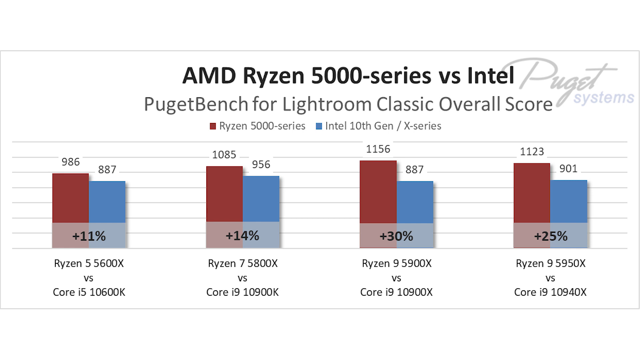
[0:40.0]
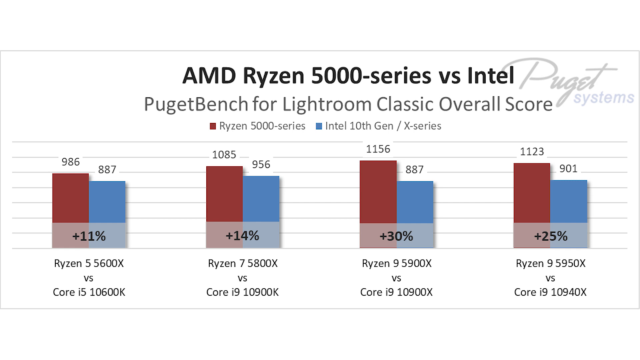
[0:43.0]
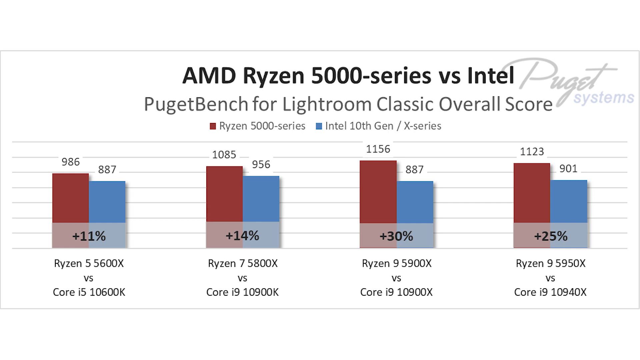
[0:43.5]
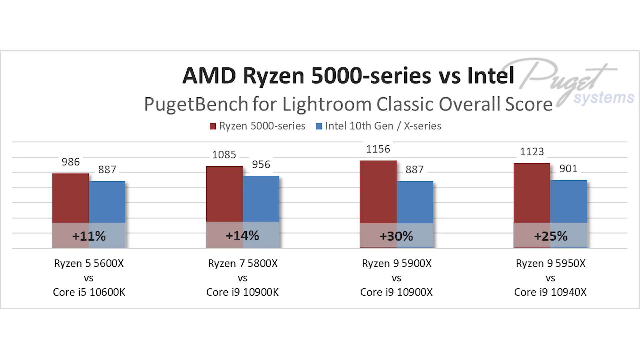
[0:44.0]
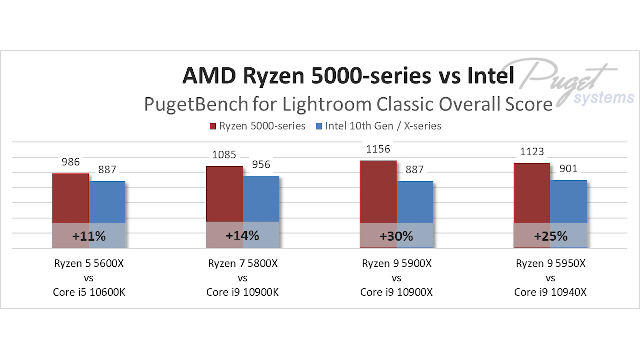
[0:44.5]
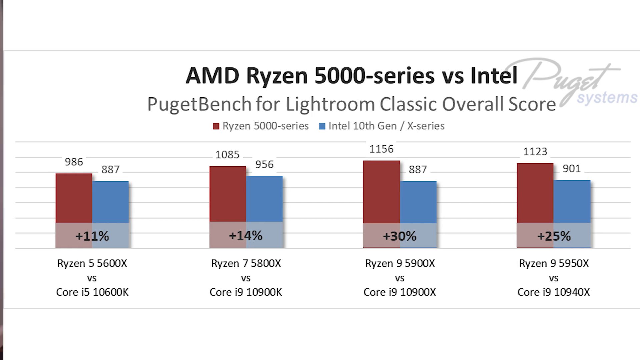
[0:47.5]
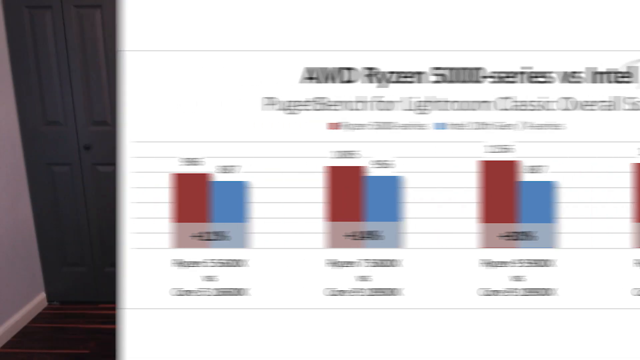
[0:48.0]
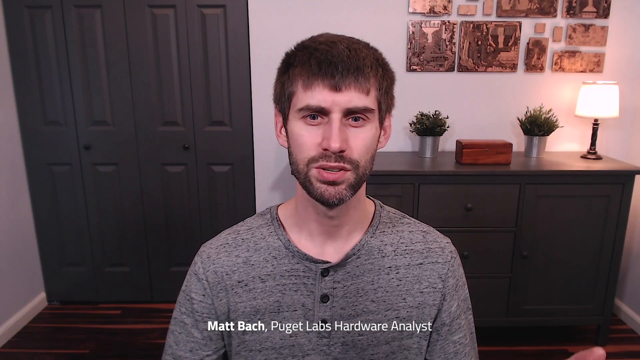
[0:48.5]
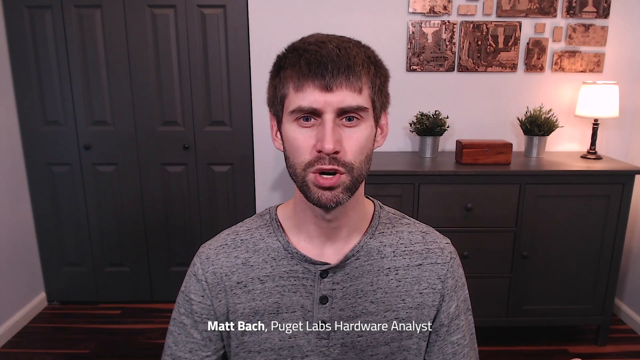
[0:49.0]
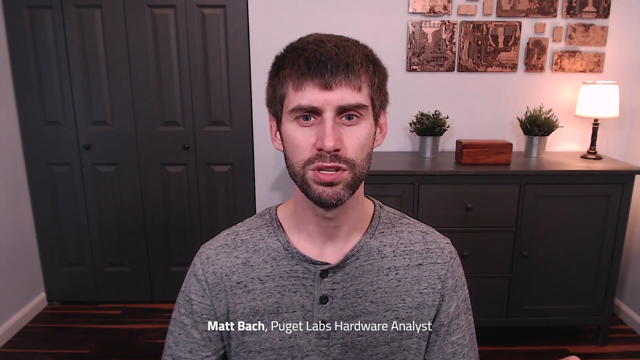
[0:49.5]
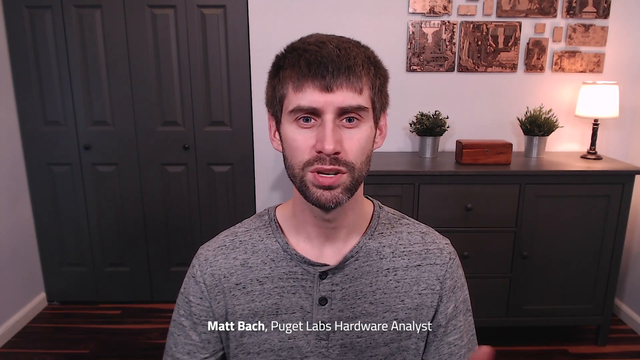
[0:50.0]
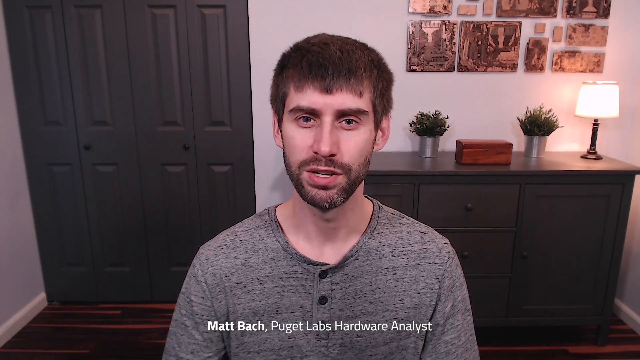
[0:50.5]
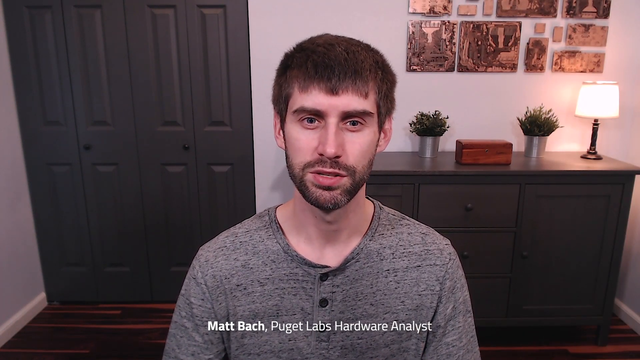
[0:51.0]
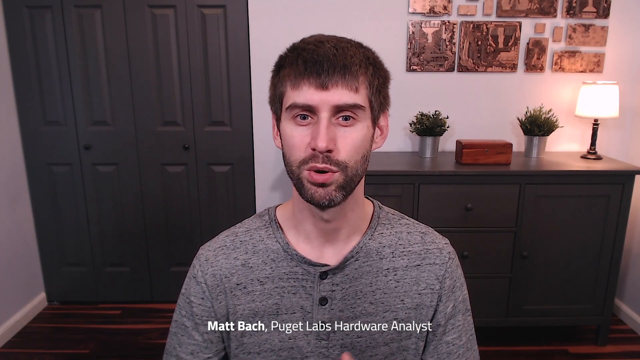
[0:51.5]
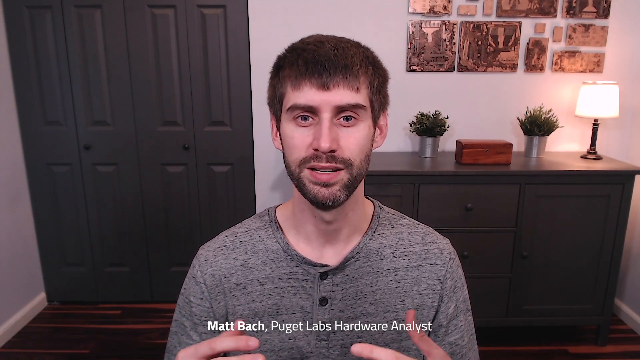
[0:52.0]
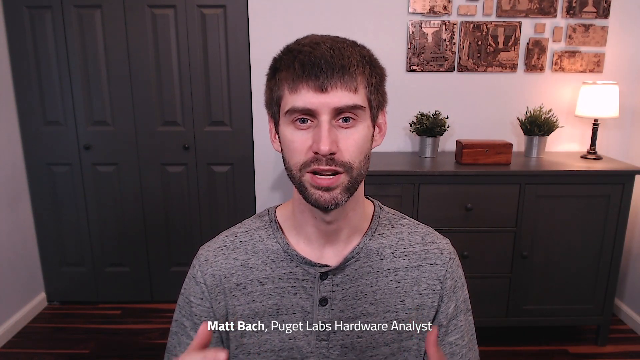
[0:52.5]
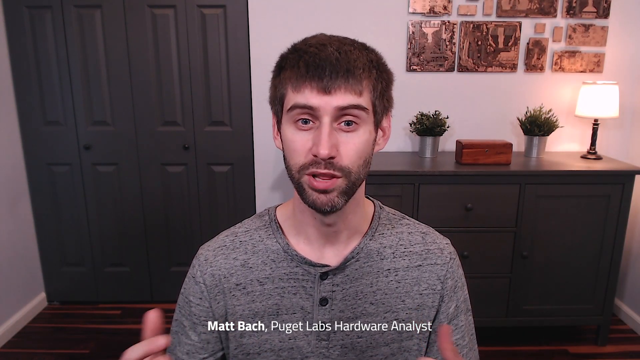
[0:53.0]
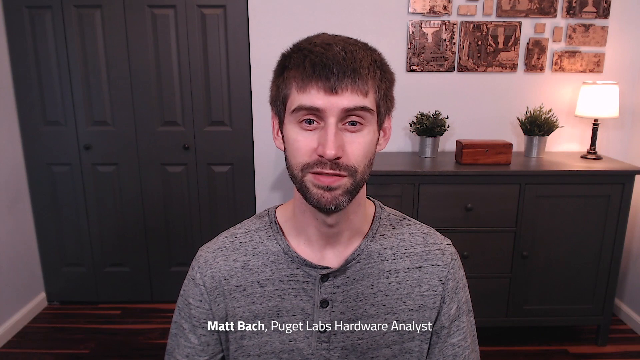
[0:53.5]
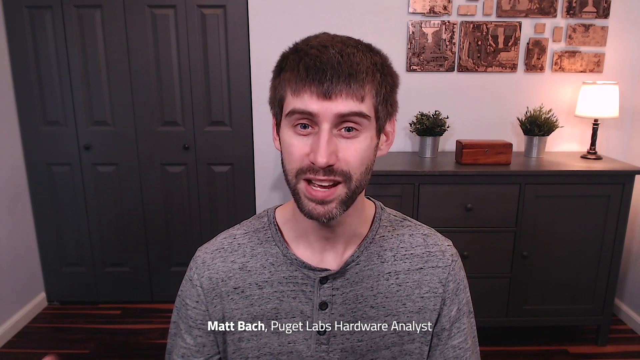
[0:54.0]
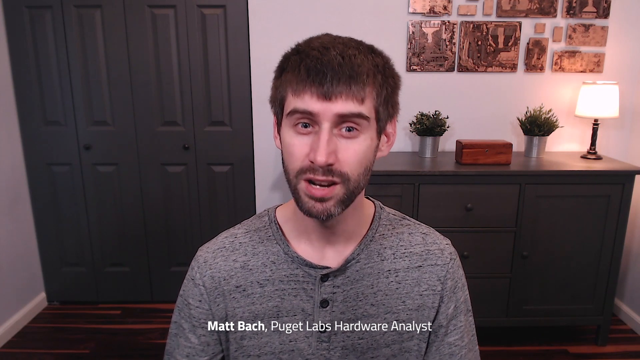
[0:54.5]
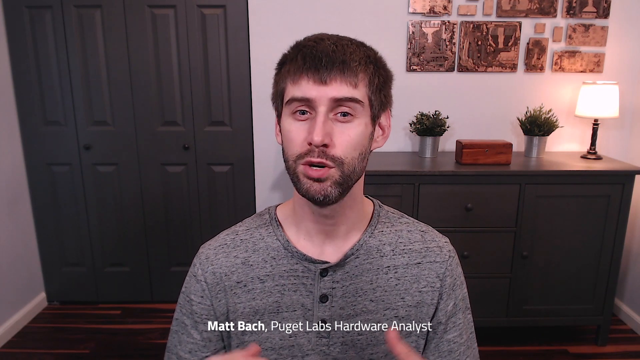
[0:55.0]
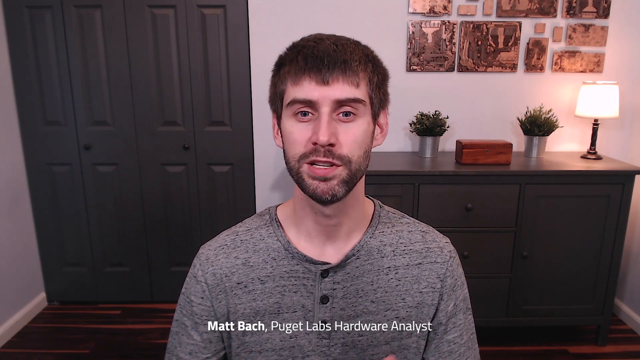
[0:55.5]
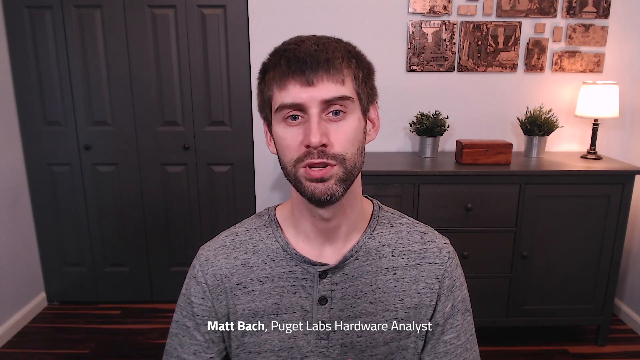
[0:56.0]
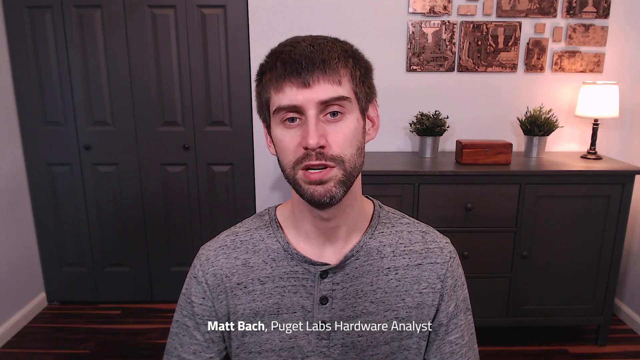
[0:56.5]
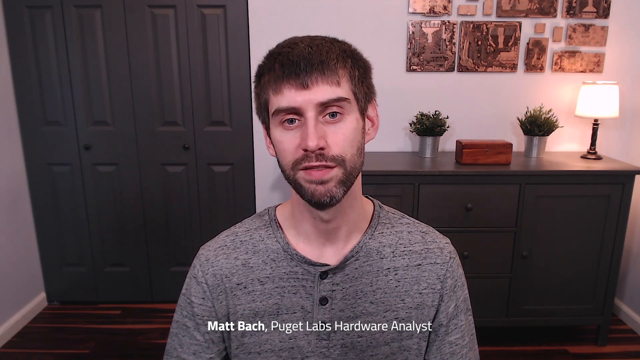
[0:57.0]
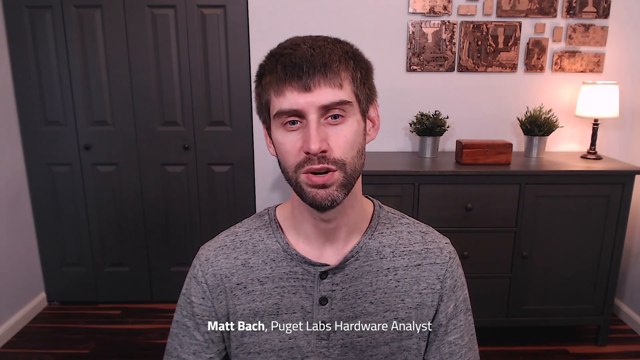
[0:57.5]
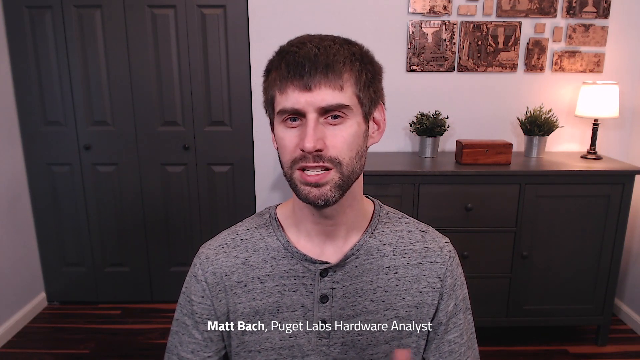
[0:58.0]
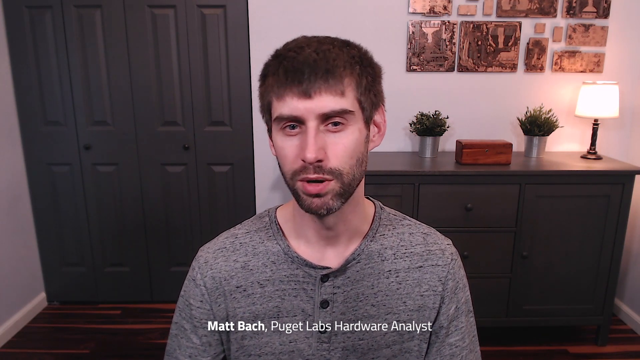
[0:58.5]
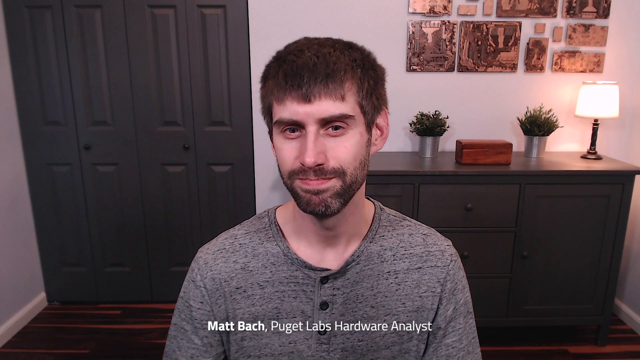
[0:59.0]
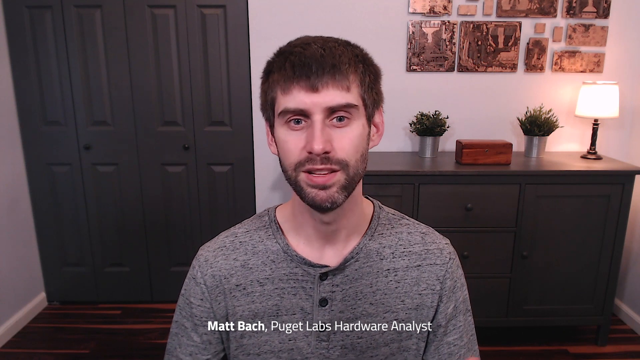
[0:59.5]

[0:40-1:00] The comparison shows the AMD 5000 series as the leading one in terms of the scores, ahead of Intel.